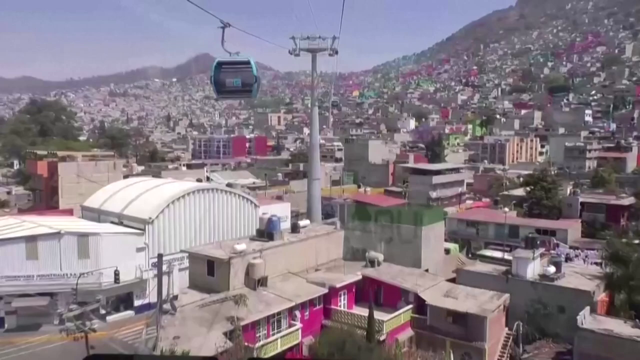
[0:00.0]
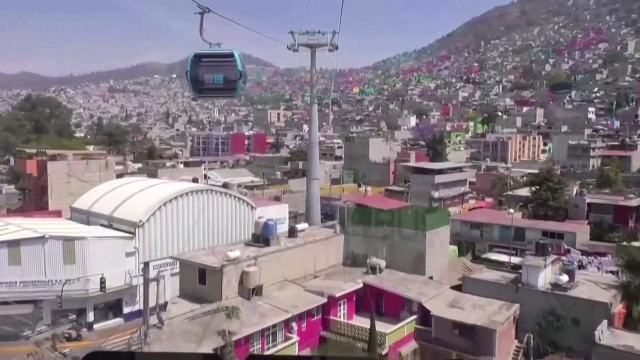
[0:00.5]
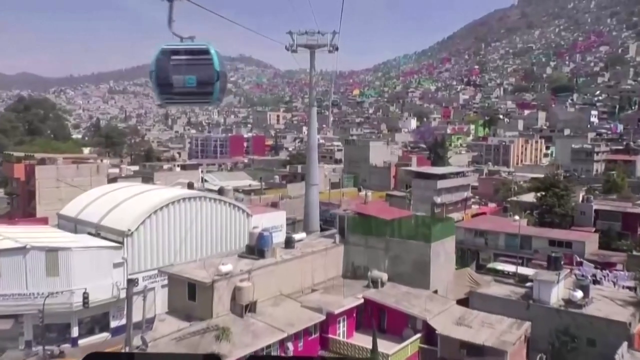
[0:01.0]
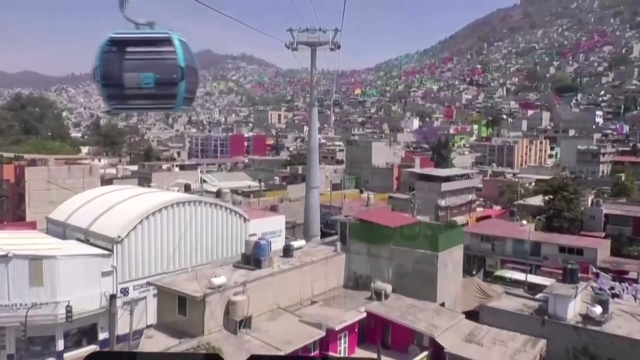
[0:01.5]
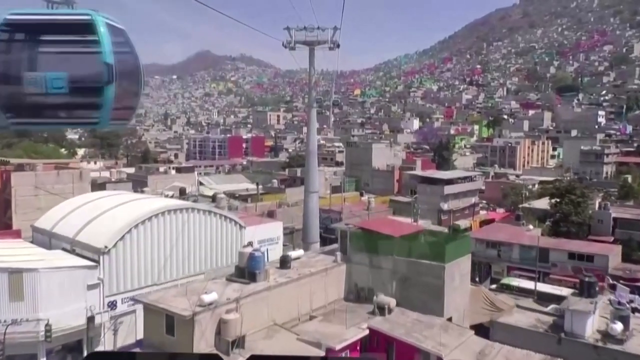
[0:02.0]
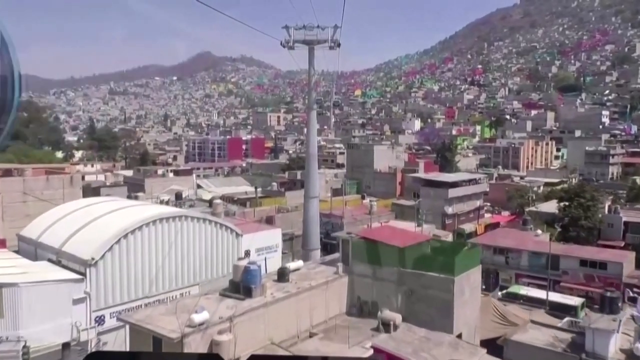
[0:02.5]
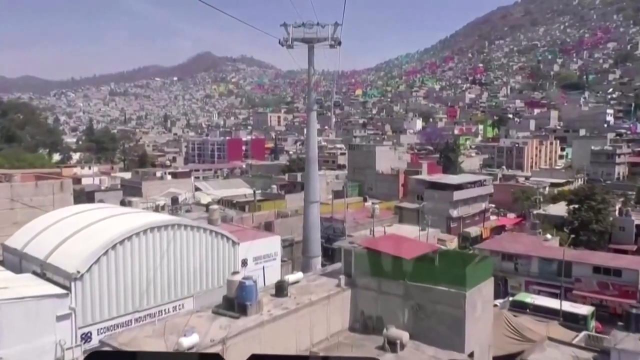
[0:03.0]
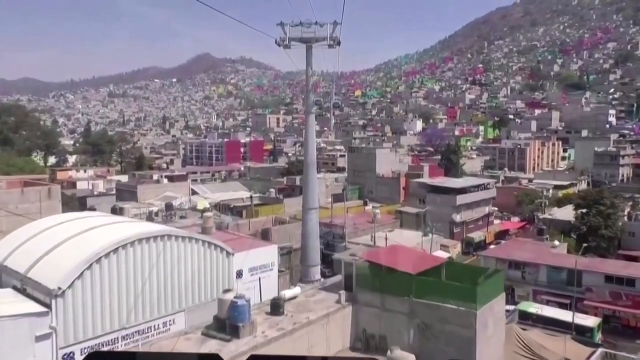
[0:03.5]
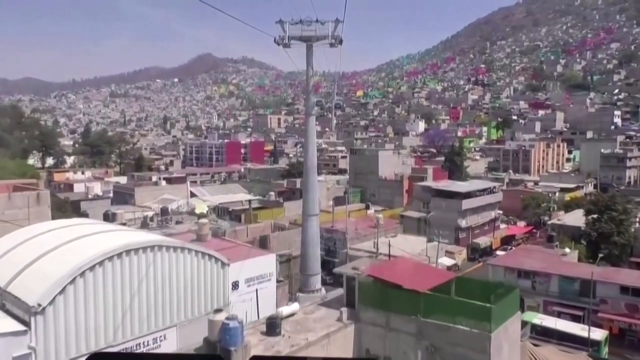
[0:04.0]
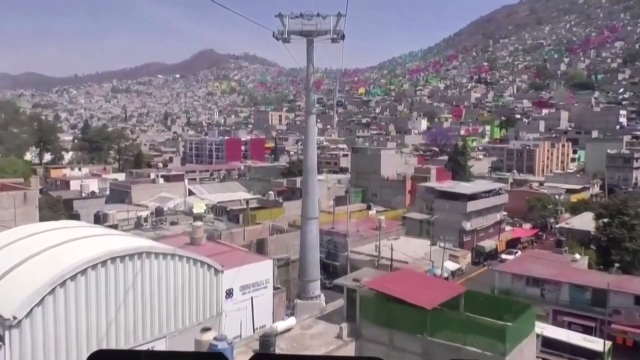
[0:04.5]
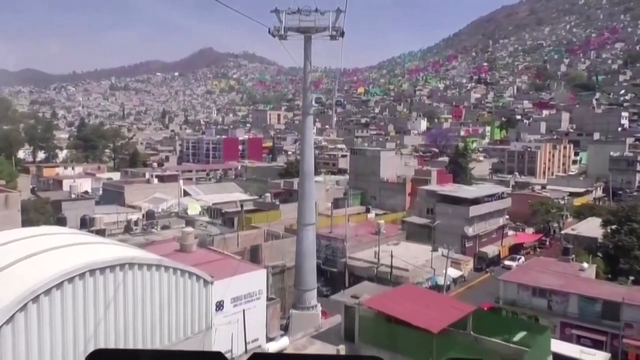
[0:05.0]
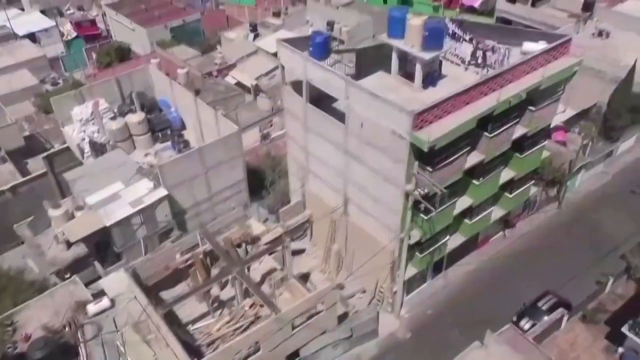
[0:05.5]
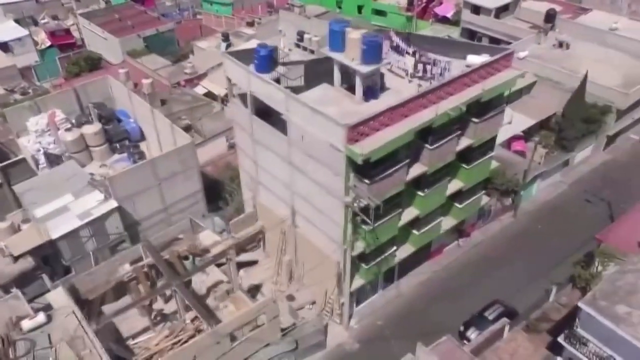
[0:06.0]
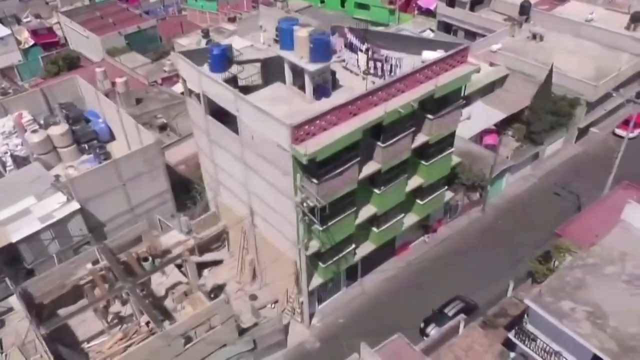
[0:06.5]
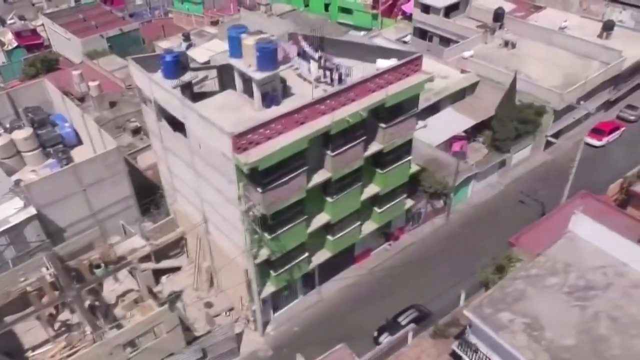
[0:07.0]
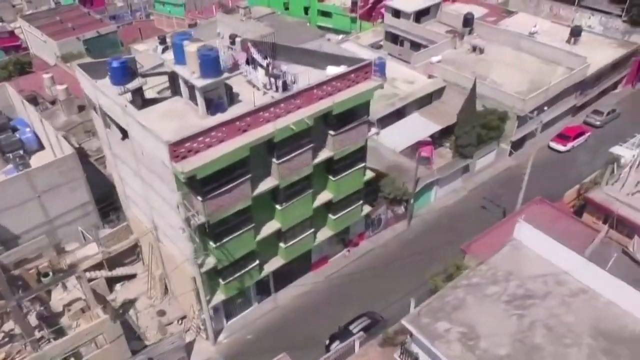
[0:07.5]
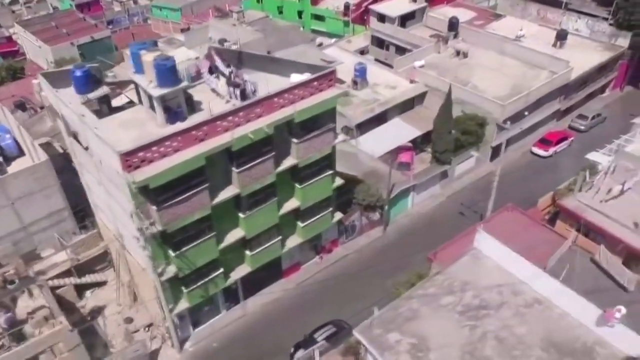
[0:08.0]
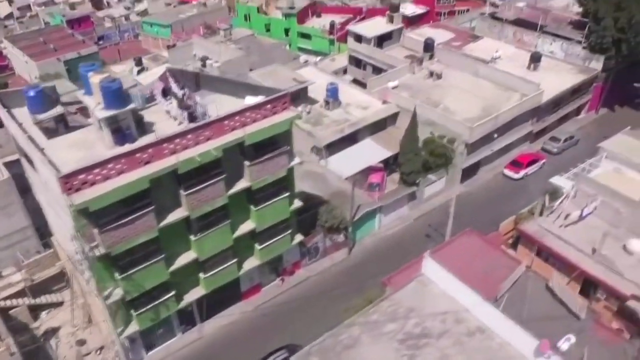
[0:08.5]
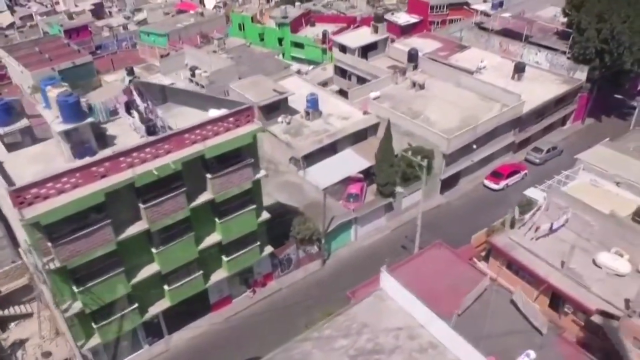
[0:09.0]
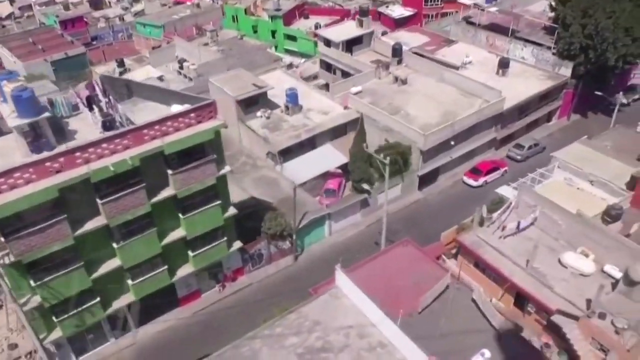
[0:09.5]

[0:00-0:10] A city appears with a bunch of buildings and some wires carrying what looks to be some kind of seat, maybe like something seen at an amusement park where people sit above and look at the scenery. The camera moves forward toward a pole that resembles a power pole. The scene then transitions to a group of buildings with a very outdated, old look, with some cars parked on the side of the street. Finally, some people wearing face masks are sitting in what looks to be a kind of cube in the air; one is a young boy and the other is a woman with her hair pulled back in a bun.